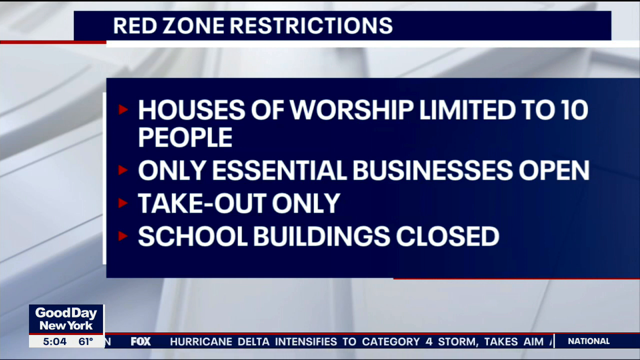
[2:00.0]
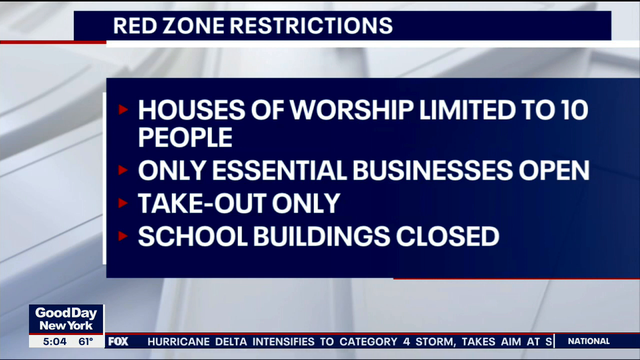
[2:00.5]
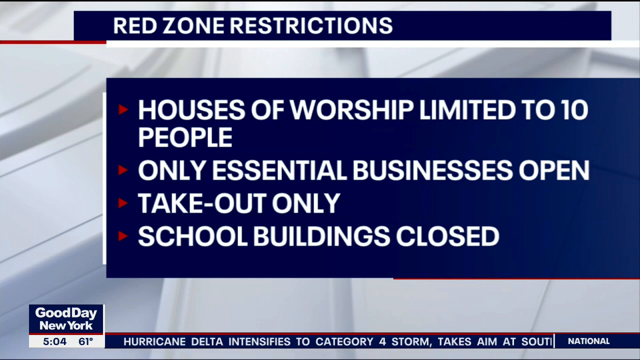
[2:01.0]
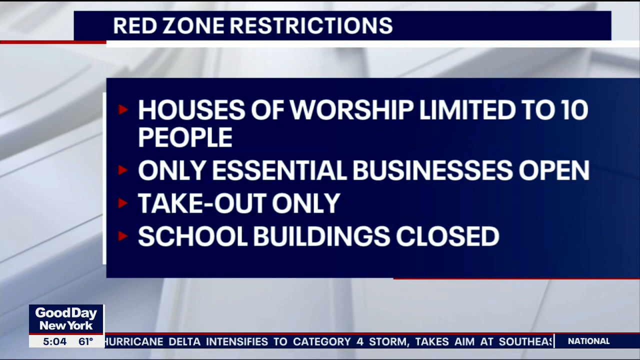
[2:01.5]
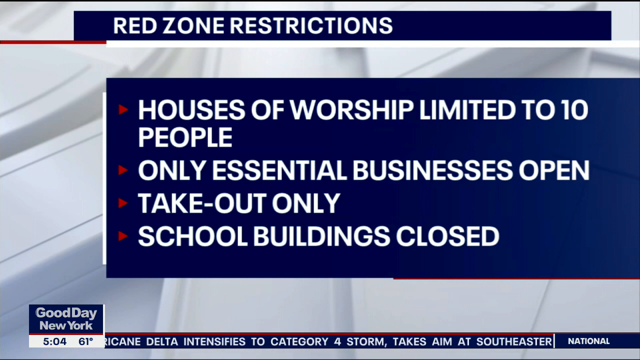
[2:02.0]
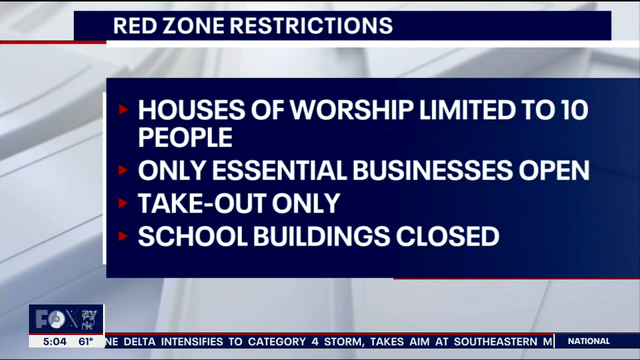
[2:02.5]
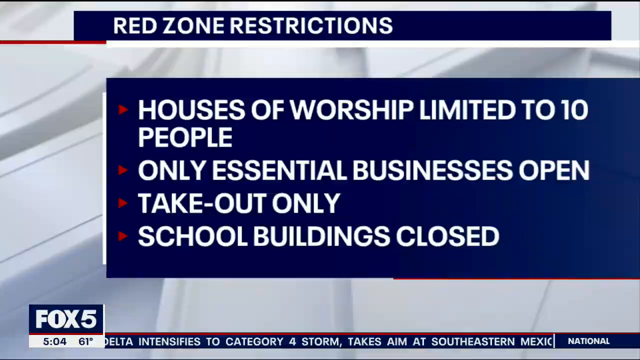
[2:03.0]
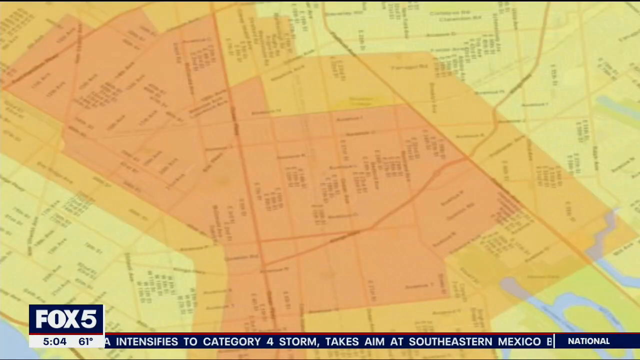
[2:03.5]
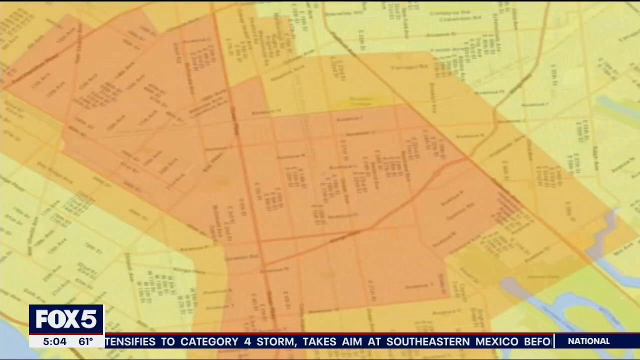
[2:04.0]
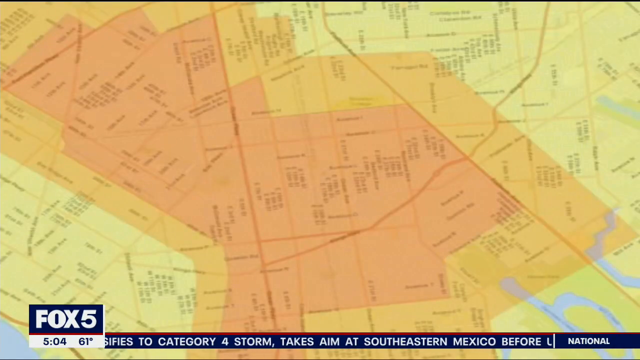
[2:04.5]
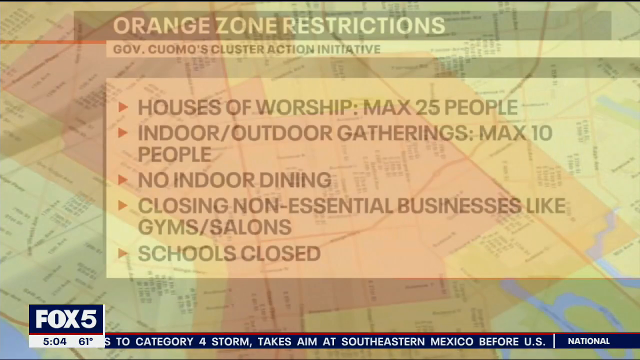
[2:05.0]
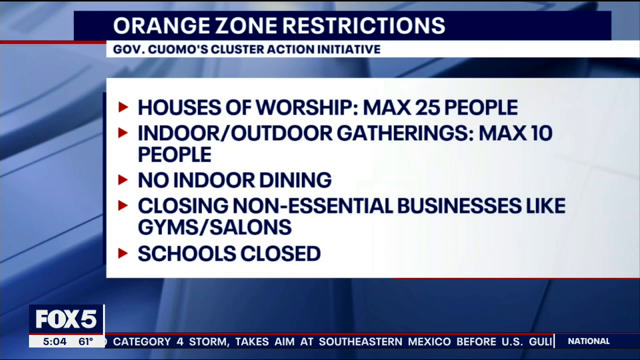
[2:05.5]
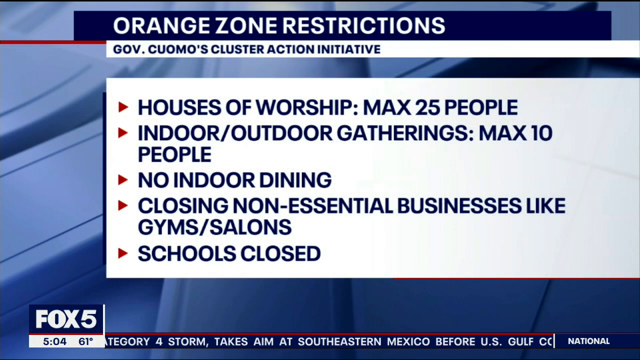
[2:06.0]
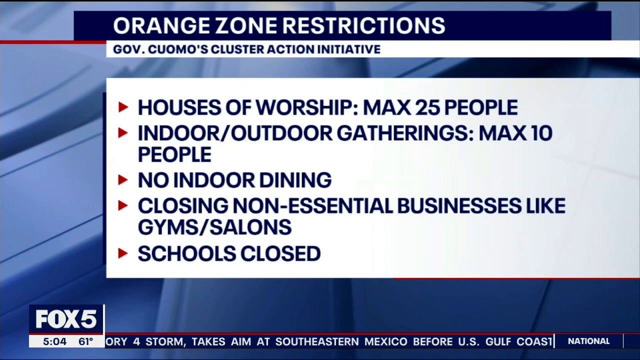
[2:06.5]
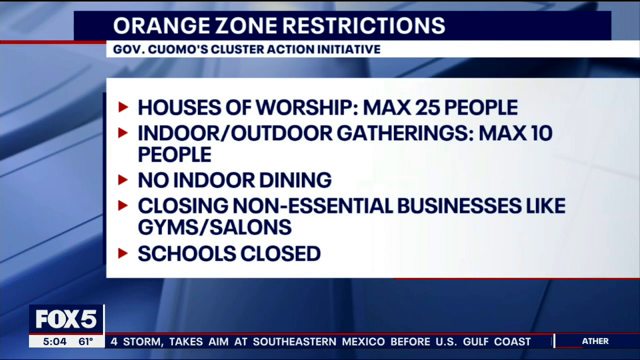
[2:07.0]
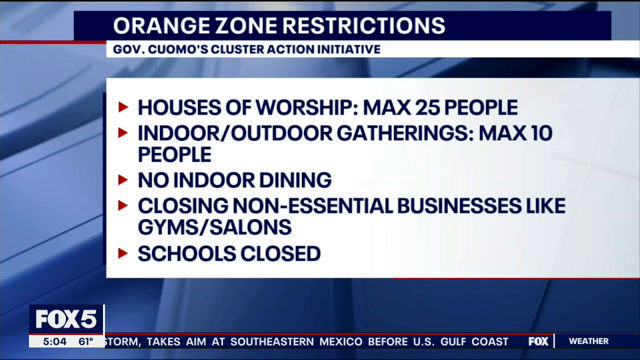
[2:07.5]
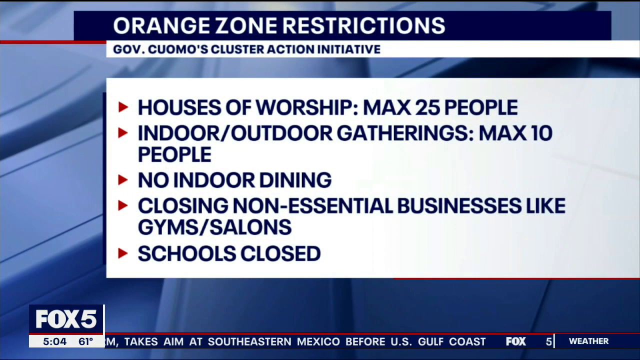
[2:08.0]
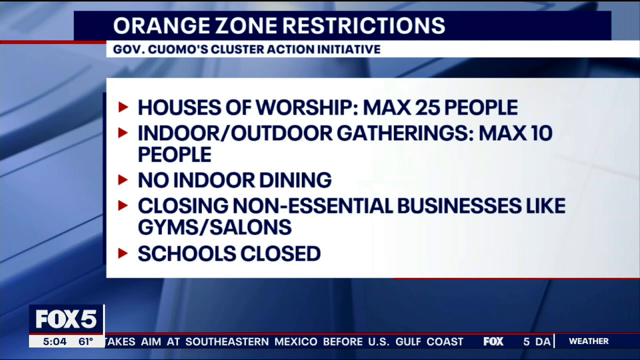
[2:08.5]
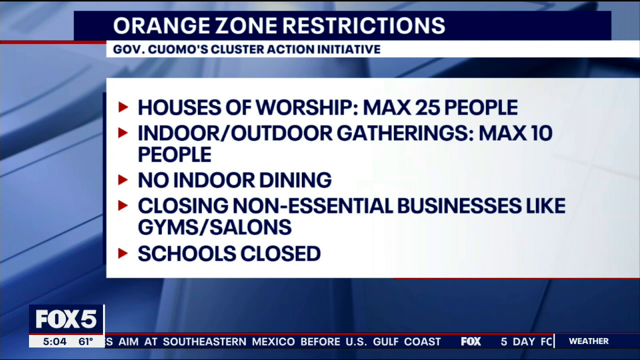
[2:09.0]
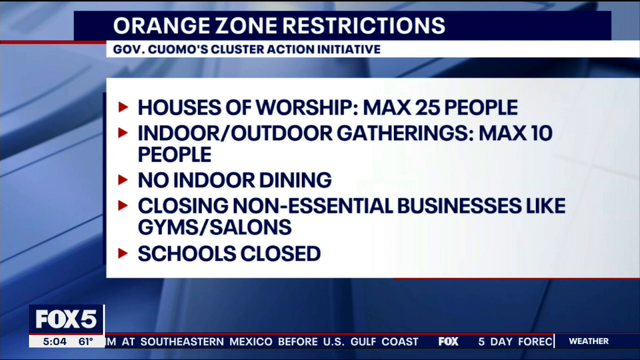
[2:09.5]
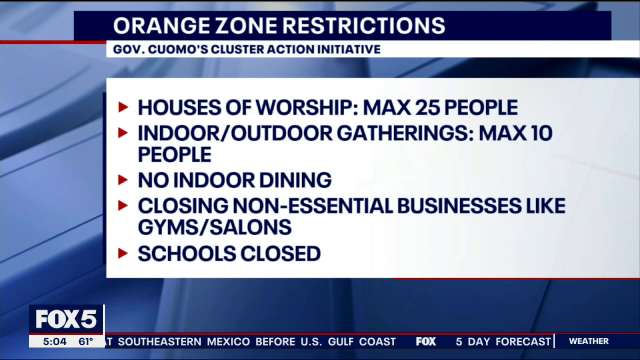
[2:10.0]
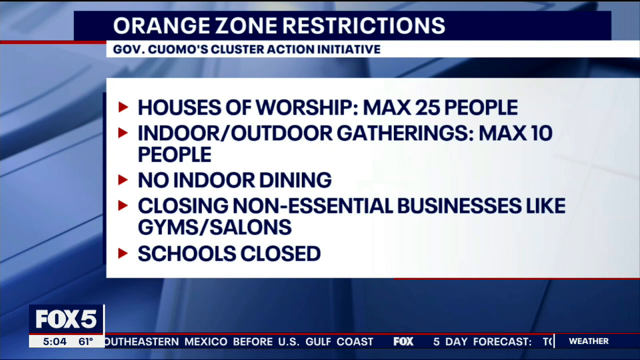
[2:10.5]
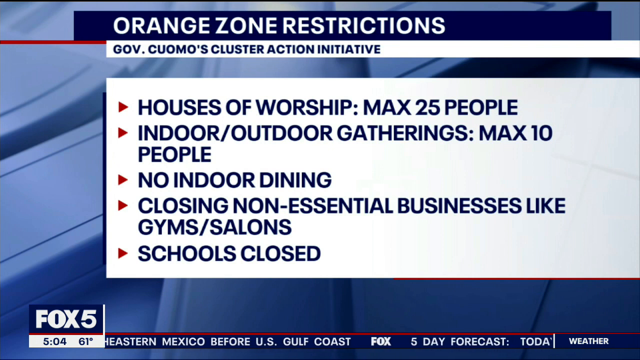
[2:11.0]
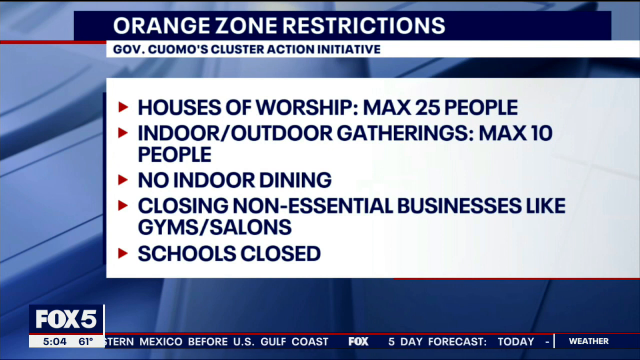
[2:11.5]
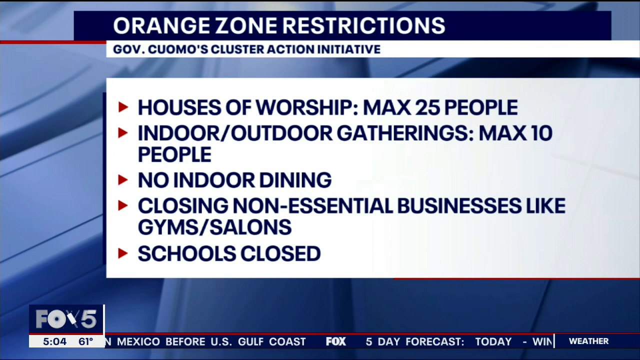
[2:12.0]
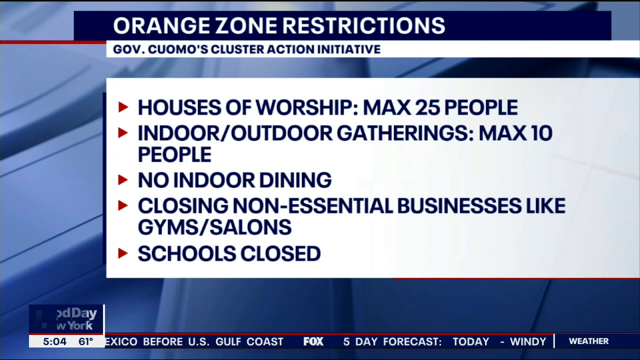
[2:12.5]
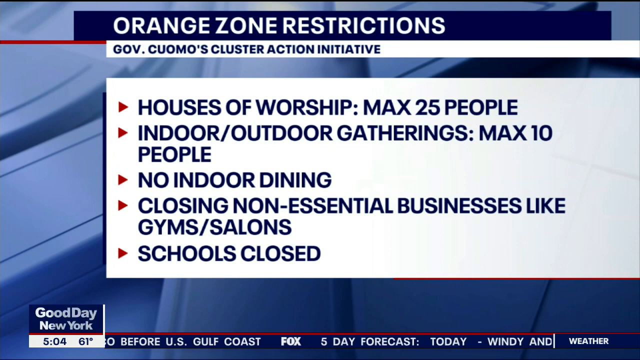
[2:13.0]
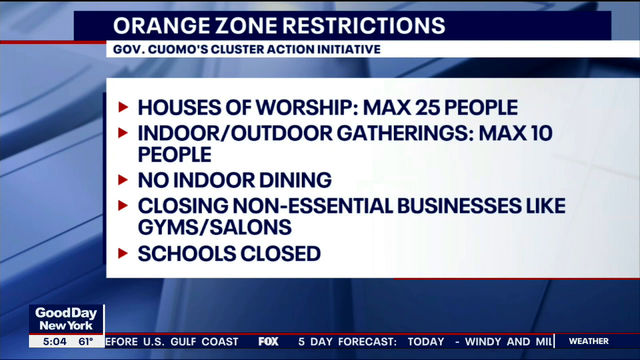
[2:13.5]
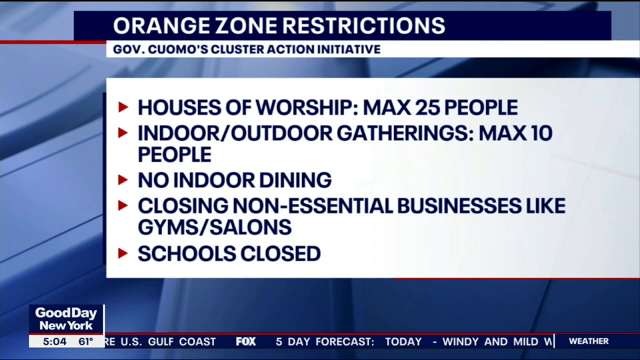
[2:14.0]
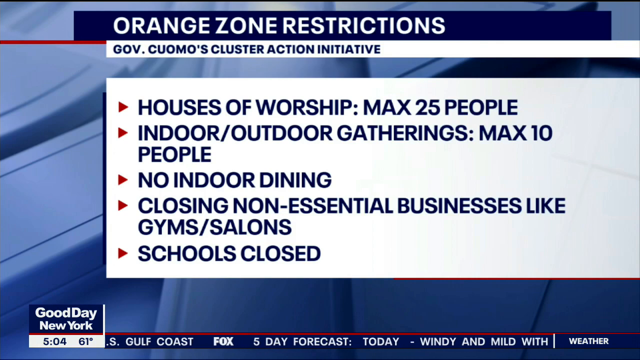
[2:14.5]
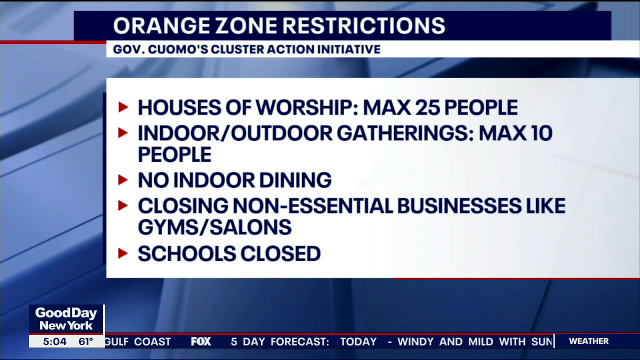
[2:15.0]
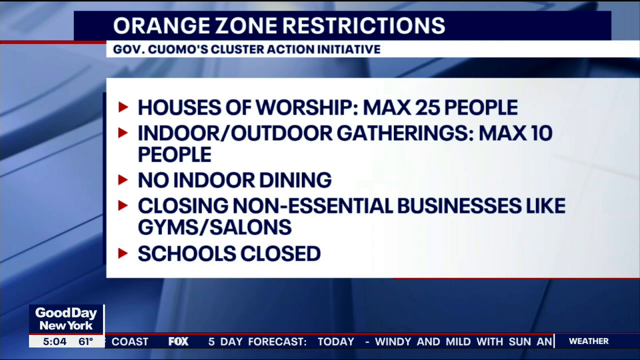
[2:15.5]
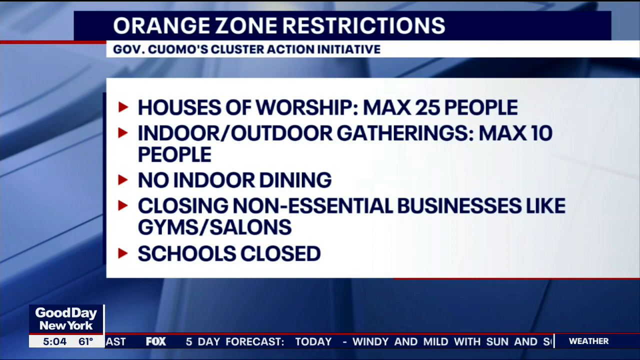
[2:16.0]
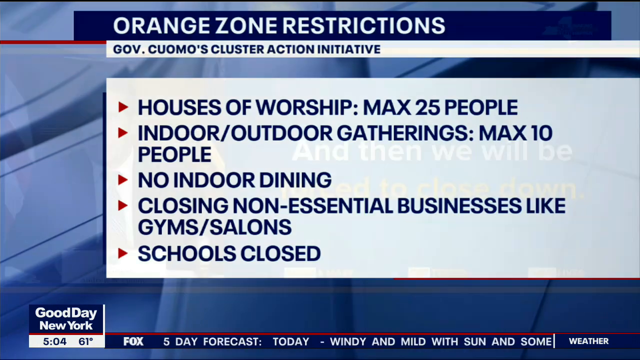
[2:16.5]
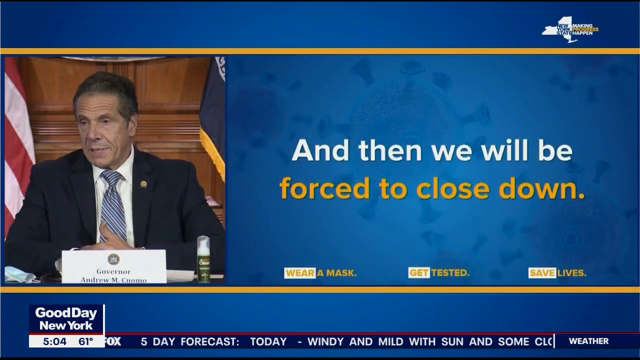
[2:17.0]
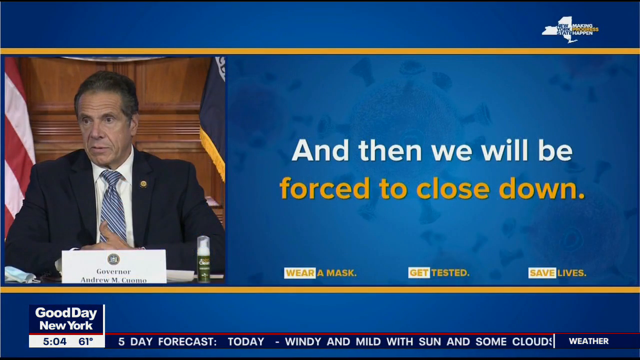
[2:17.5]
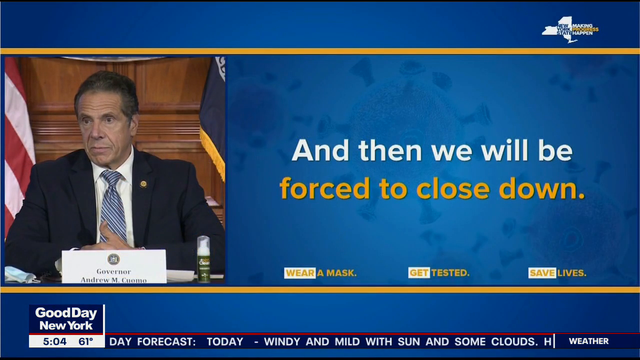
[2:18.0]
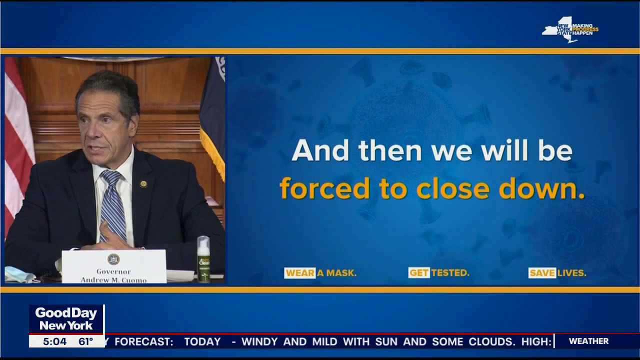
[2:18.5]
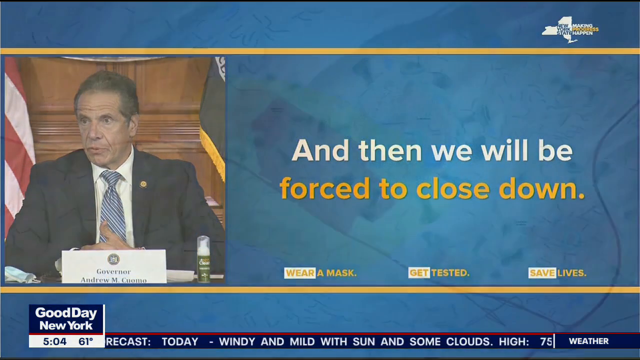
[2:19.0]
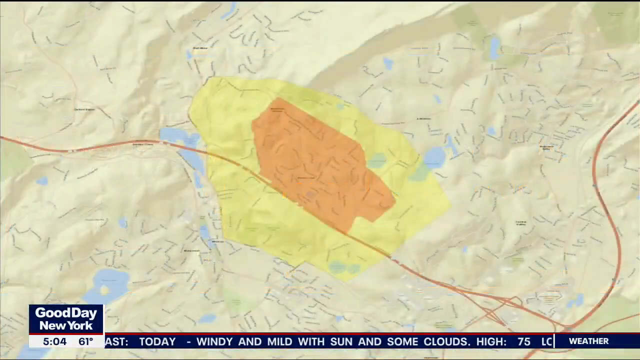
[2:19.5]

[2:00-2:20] The slide fades away and is replaced by a close-up of the map showing the orange and red zones, which lingers for a few seconds. A similar slide follows, with a navy rectangle at the top whose centred white text reads "orange zone restrictions". Below it, a white rectangle reads "Gov Cuomo's Cluster Action Initiative" in navy text. Below that is a large white text box with five bullet points, marked with red arrows and written in large, bold navy text: "houses of worship max 25 people", "indoor outdoor gatherings max 10 people", "no indoor dining", "closing non-essential businesses like gyms salons" and "schools closed". The slide stays on screen for some time. The image then changes to a split screen with the governor on the left and a quote on the right. The governor nods and looks very serious as he speaks. The quote reads "and then will be forced to close down", with the first half in bold white text and "forced to close down" in yellow. Molecular images of the COVID virus are in the background.